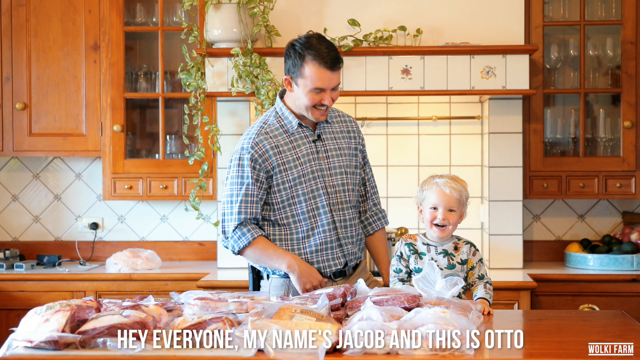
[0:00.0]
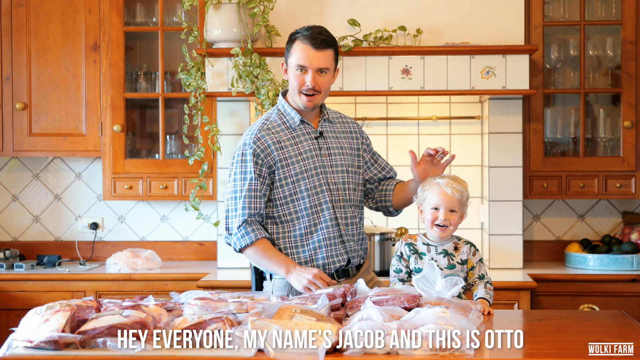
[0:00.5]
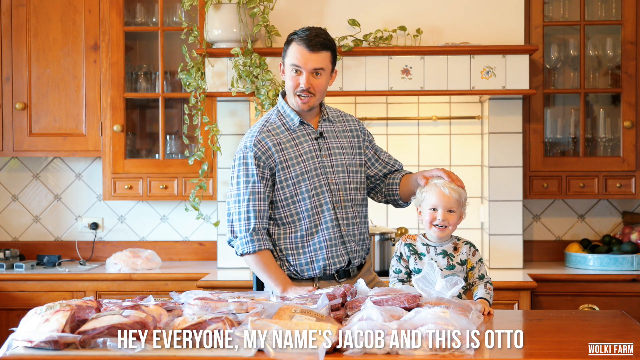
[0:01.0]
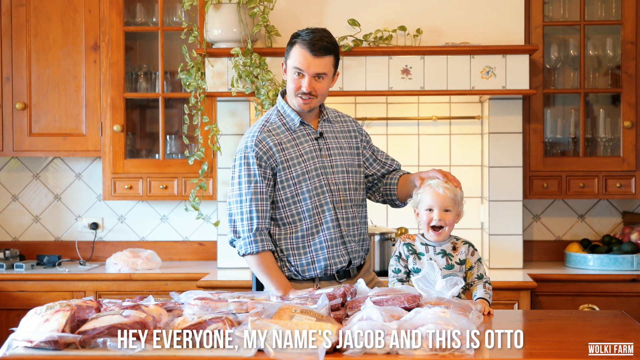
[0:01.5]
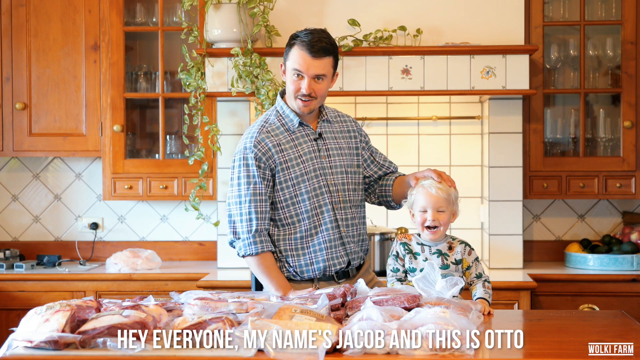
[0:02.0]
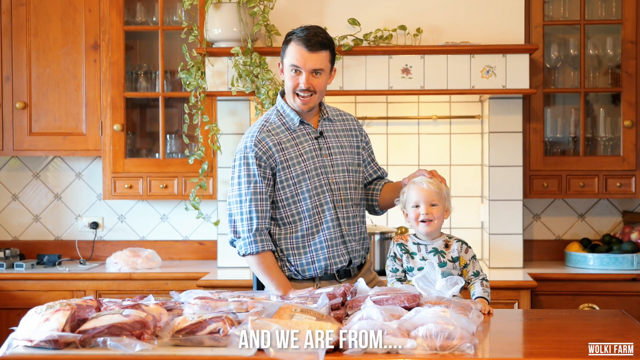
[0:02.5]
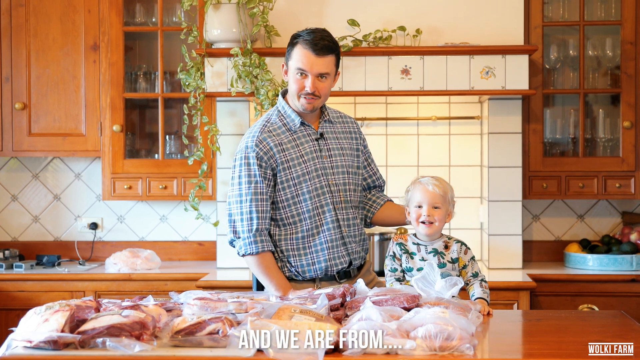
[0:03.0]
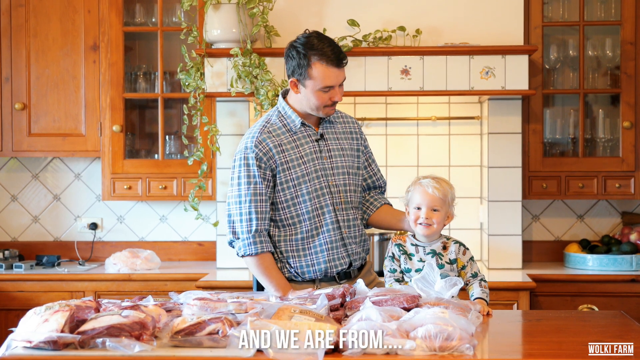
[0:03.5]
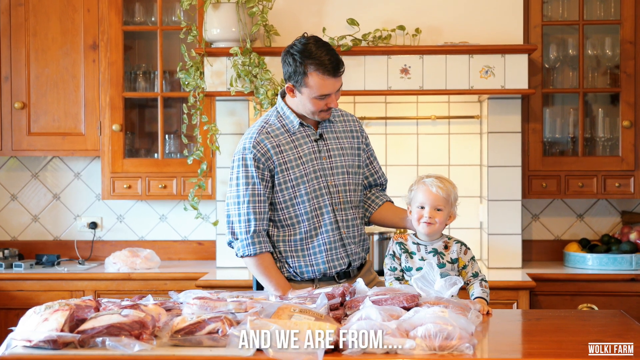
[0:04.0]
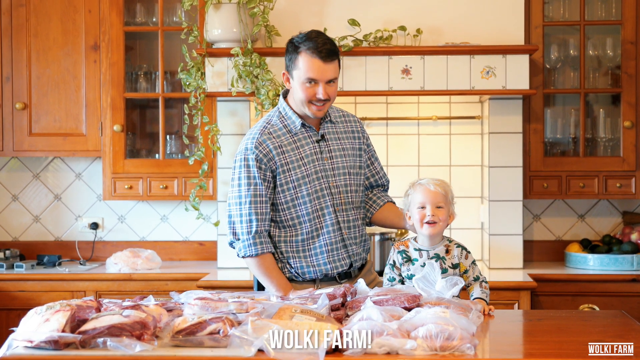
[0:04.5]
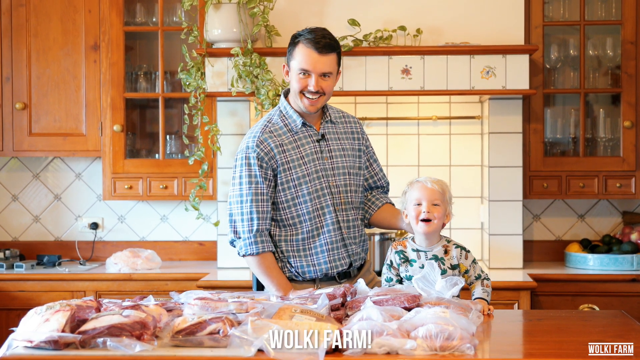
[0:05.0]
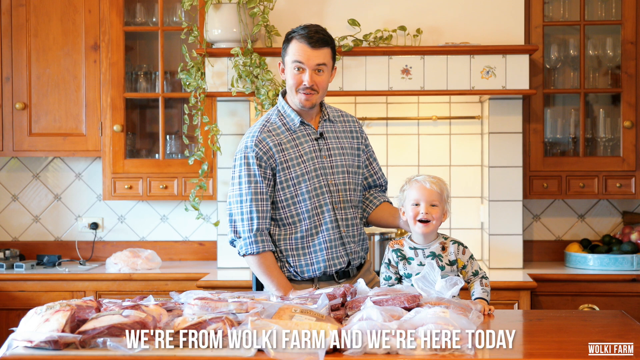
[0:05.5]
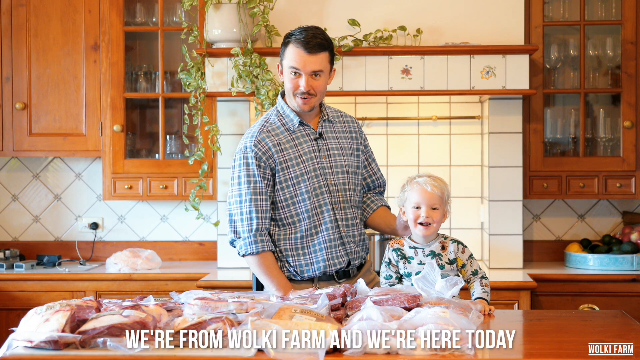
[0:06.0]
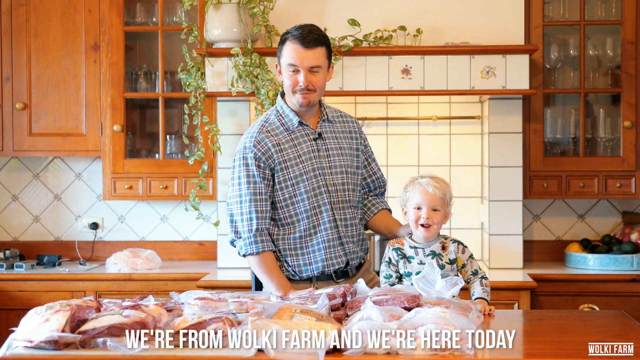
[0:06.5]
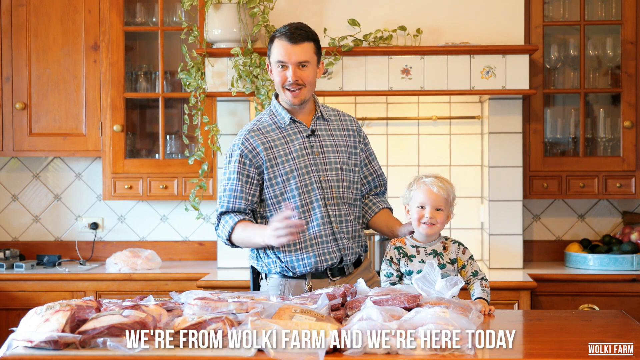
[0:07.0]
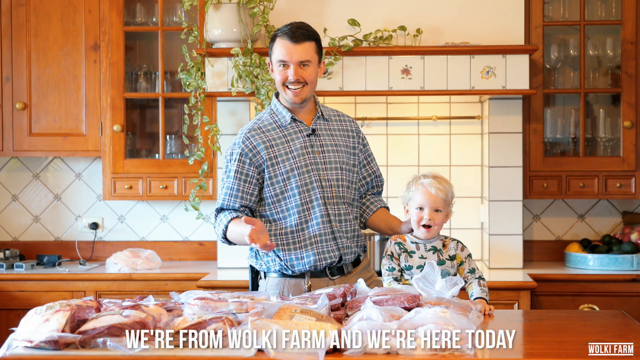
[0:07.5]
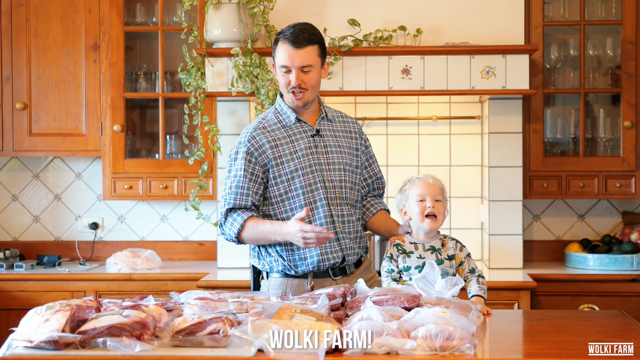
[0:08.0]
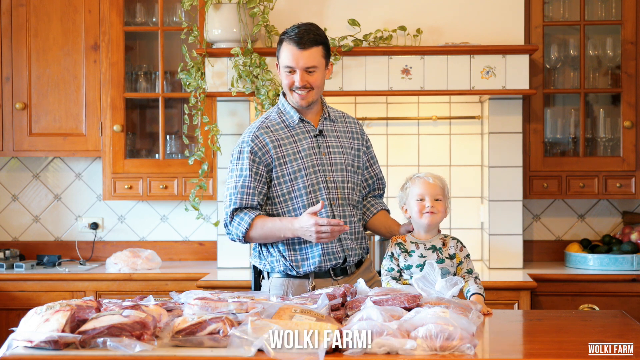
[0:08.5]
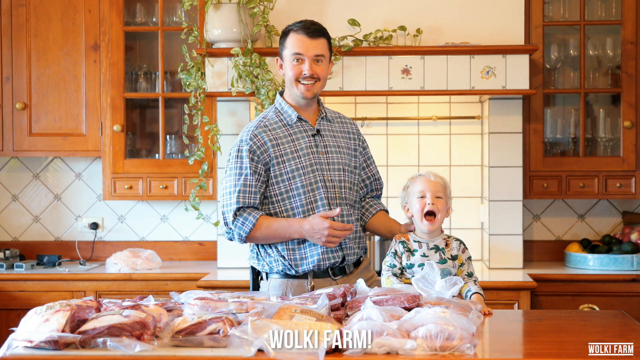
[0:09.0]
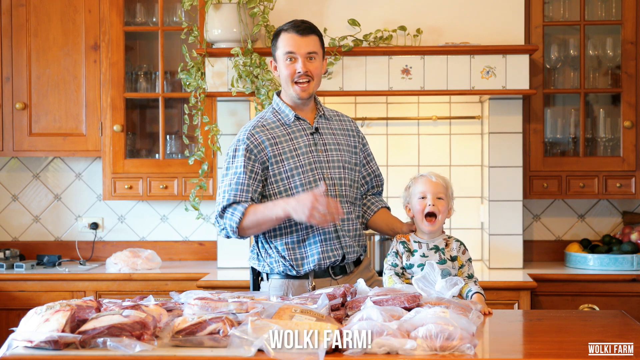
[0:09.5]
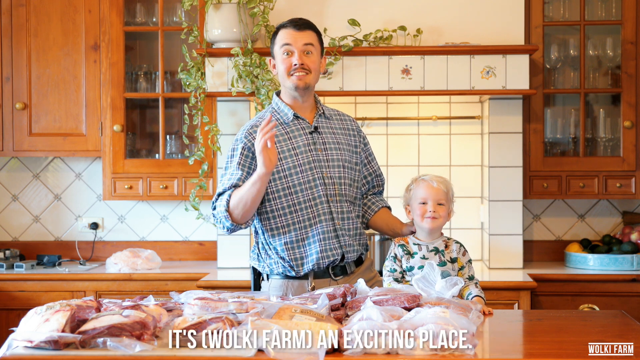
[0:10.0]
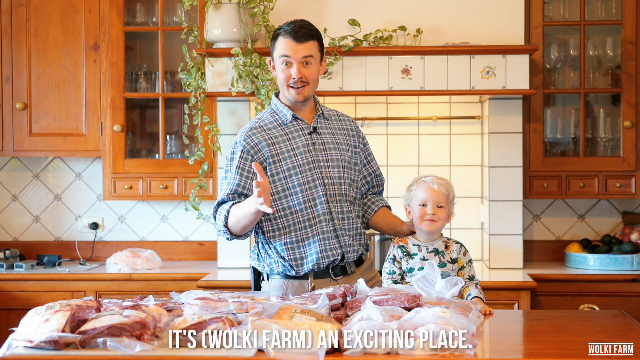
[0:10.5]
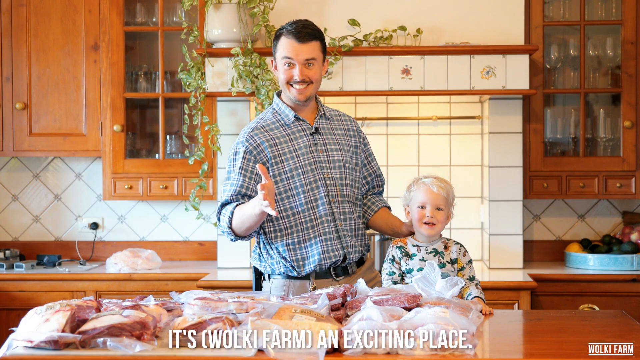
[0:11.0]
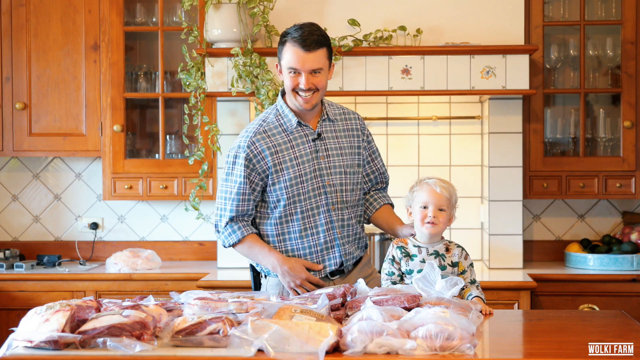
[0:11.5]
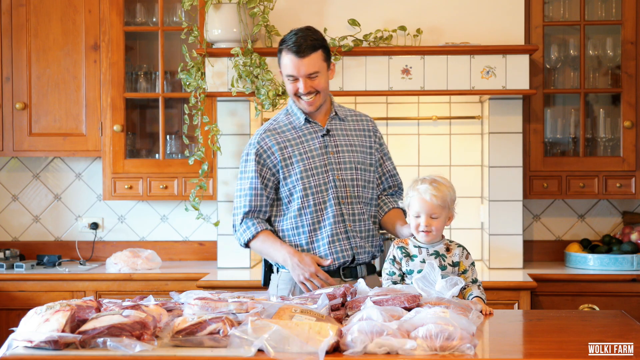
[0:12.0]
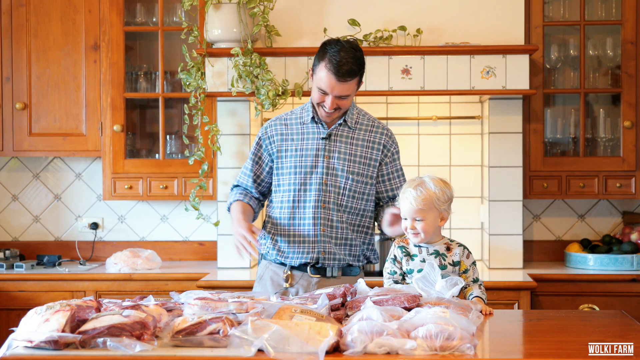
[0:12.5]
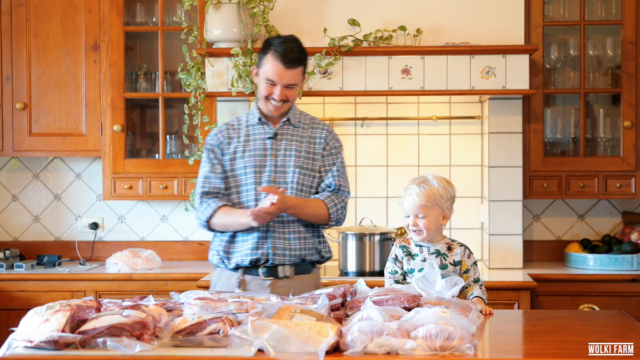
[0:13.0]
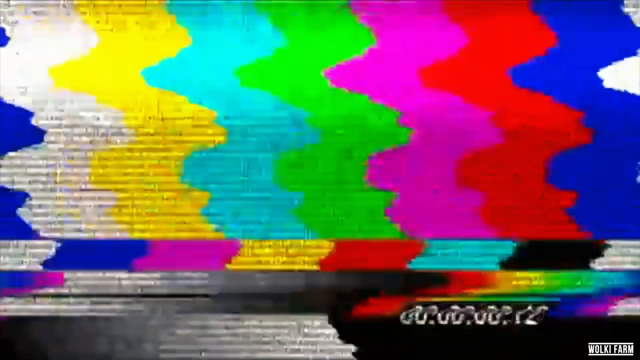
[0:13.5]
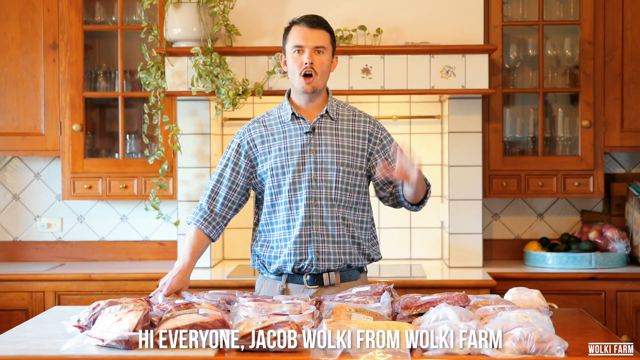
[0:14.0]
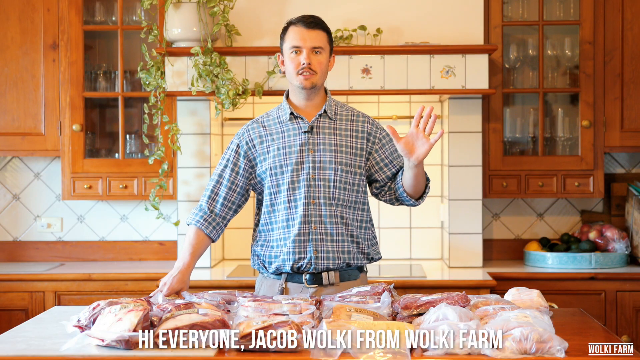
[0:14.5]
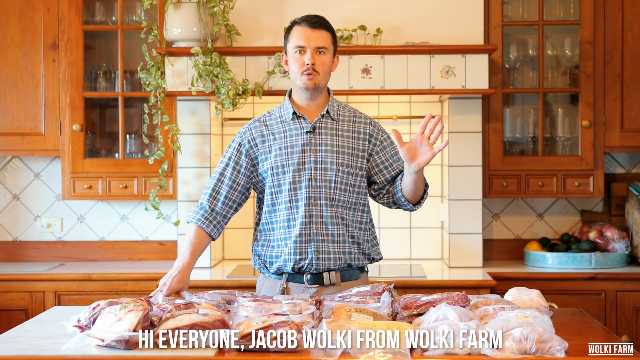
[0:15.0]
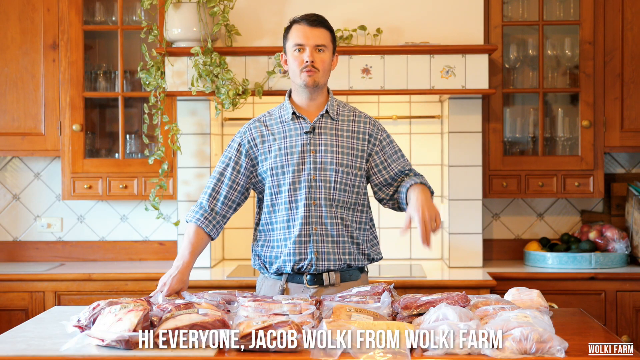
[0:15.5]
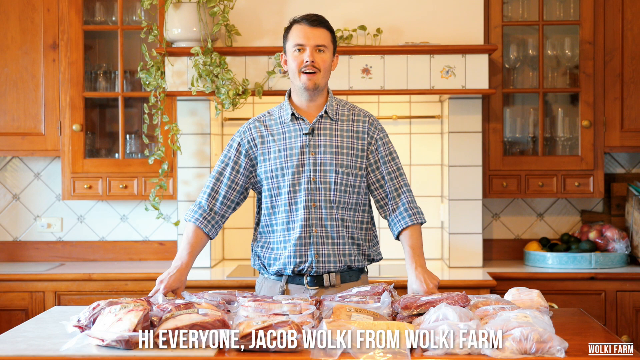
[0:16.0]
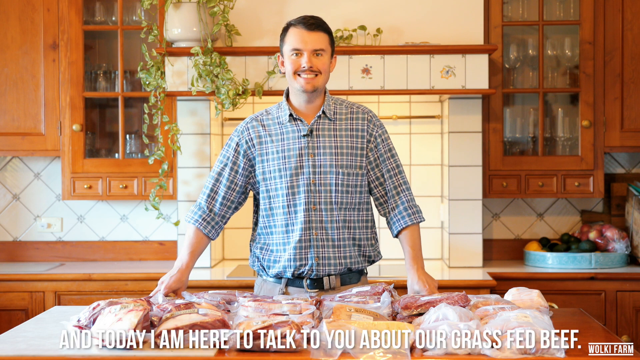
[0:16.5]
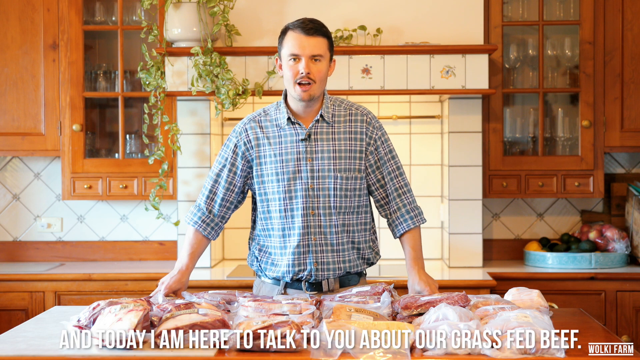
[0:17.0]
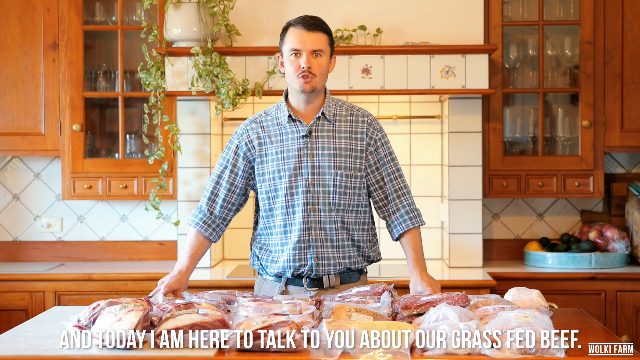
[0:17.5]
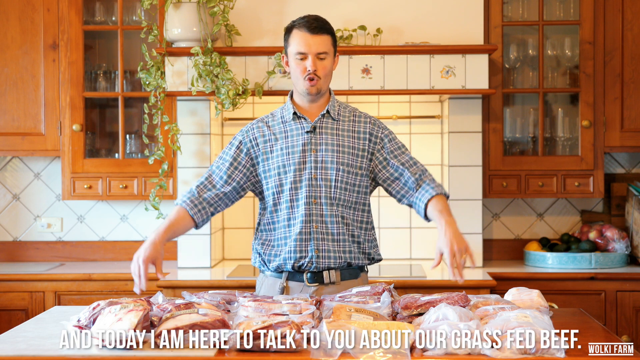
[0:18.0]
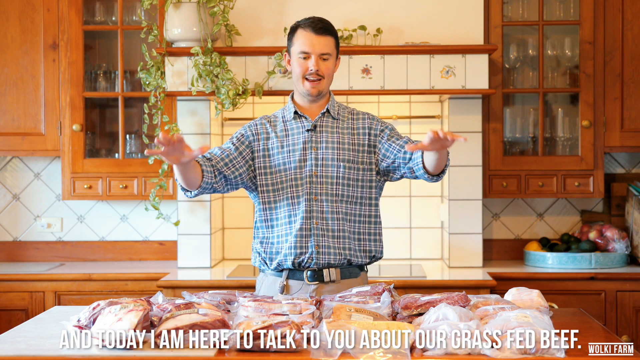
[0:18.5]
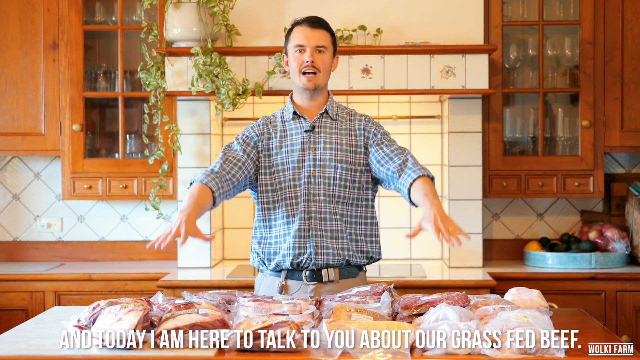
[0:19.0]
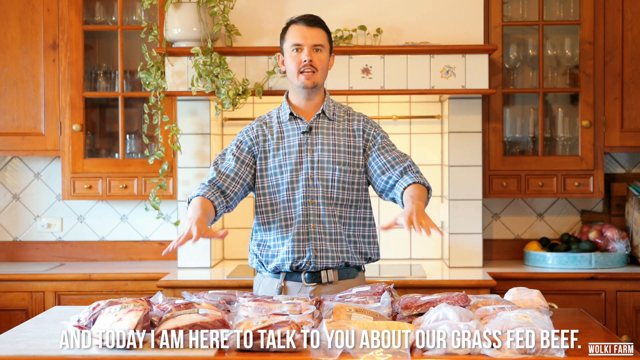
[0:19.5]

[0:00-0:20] In a typical family kitchen, a dark-haired man in a blue tartan shirt stands next to a little boy, maybe three or four years old, with blonde hair and a palm tree sweater. On the counter in front of them are lots of packages of meat. The caption reads "hey everyone my name's Jacob and this is Otto. and we are from", and the little boy says "Walkie Farm"; the adult says "we're from Walkie Farm and we're here today", the boy says "Walkie Farm" again, and the adult says "it's Walkie Farm and it's an exciting place." He claps his hand once as he laughs. A transition screen of wavy rainbow stripes follows, and afterwards only Jacob is there, the little boy having been removed from the set. He says, "Hey, everyone, Jacob Walkie from Walkie Farm. And today I'm here to talk to you about our grass fed beef."